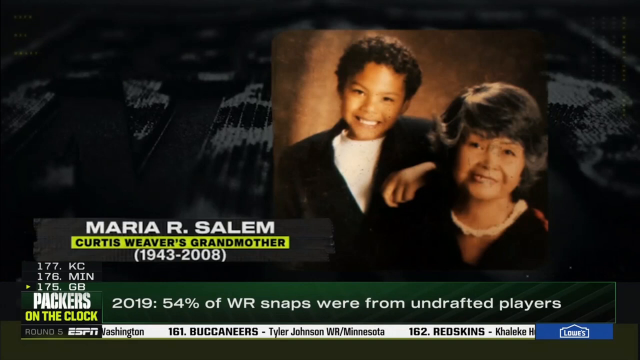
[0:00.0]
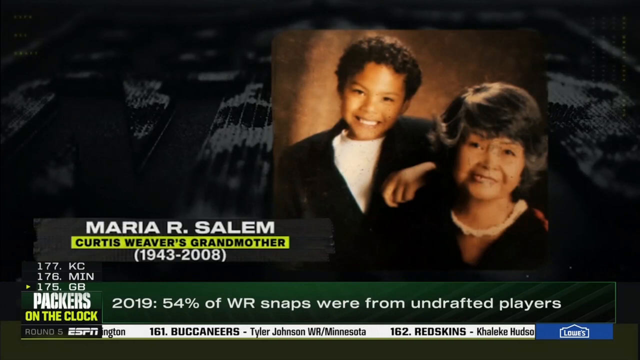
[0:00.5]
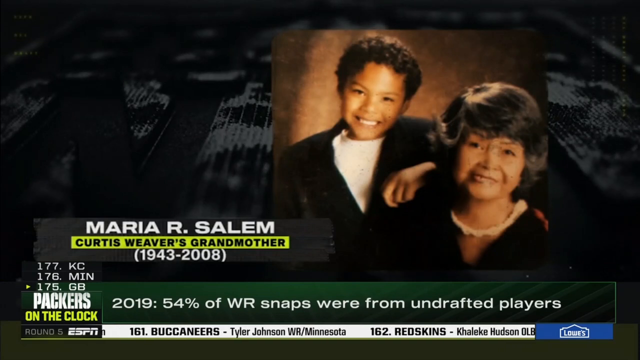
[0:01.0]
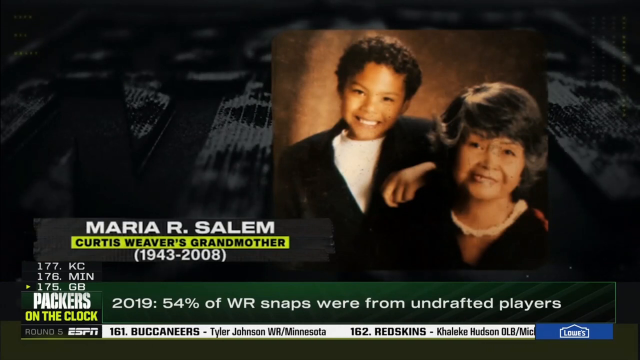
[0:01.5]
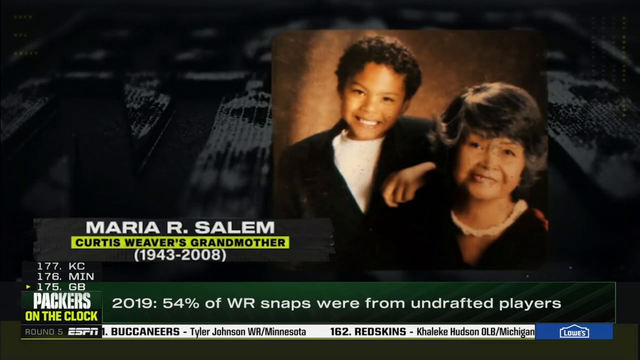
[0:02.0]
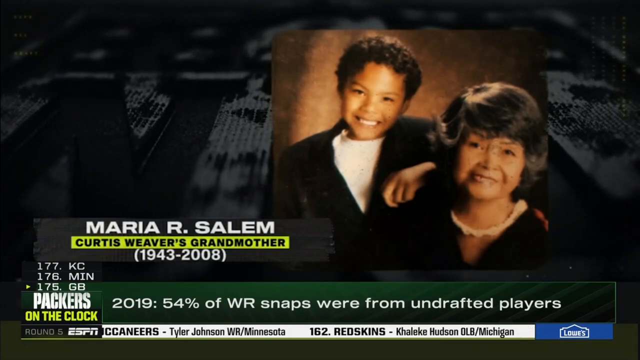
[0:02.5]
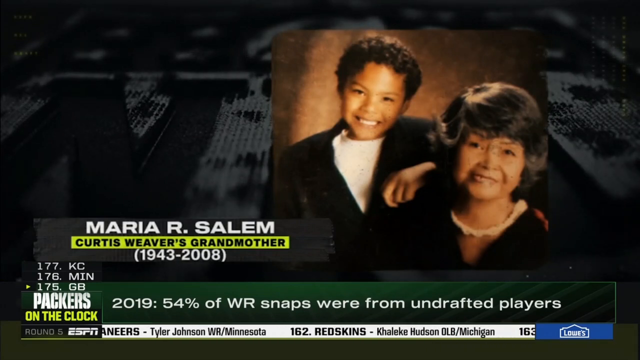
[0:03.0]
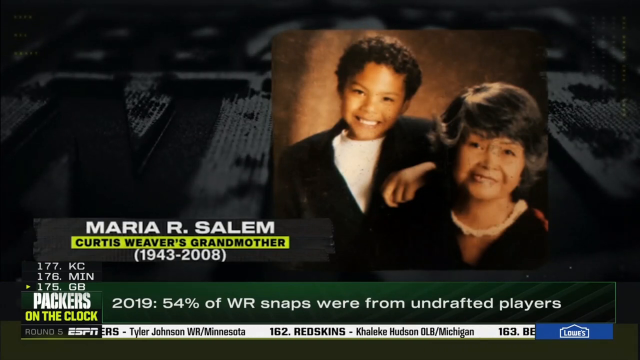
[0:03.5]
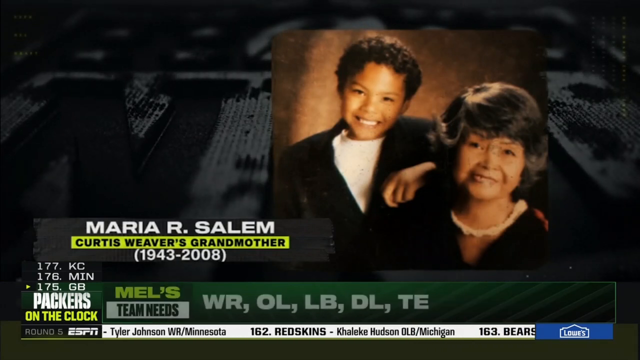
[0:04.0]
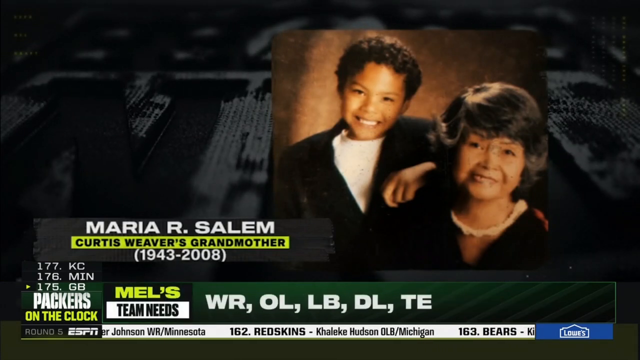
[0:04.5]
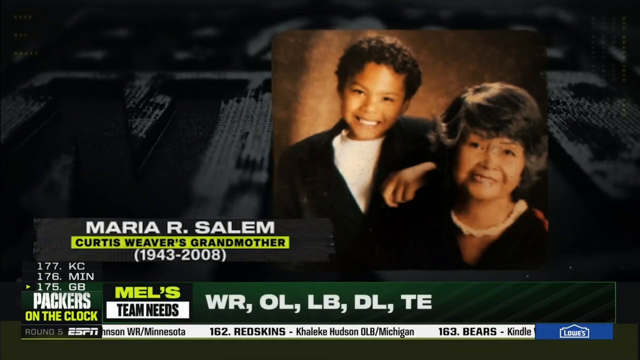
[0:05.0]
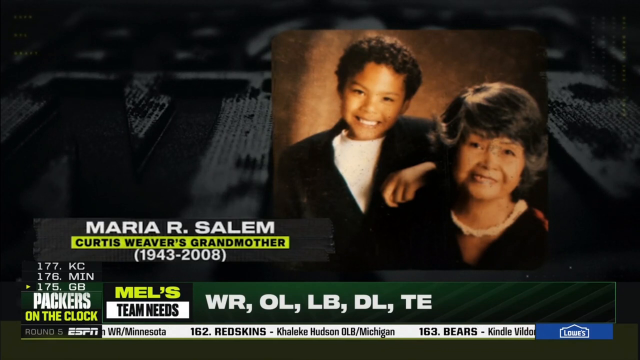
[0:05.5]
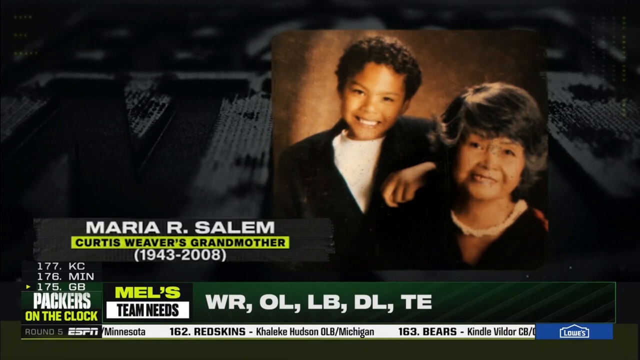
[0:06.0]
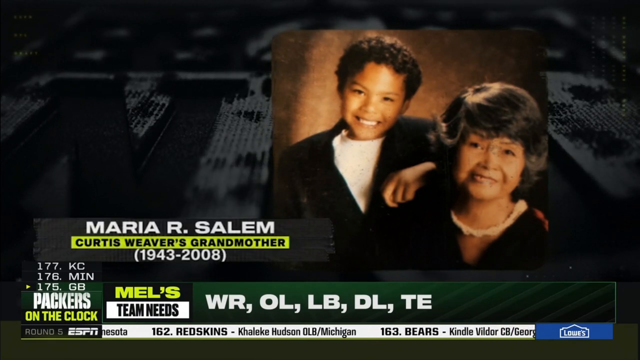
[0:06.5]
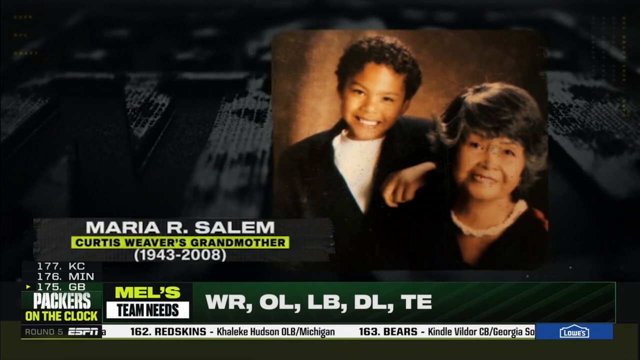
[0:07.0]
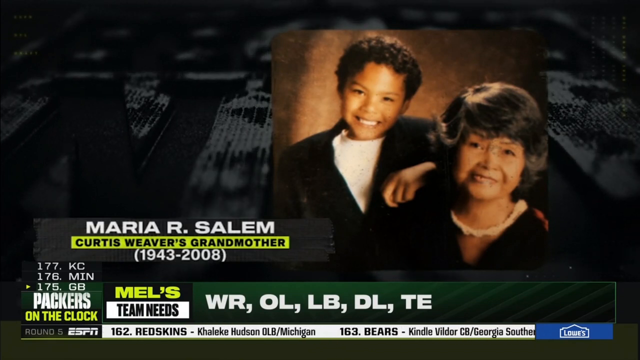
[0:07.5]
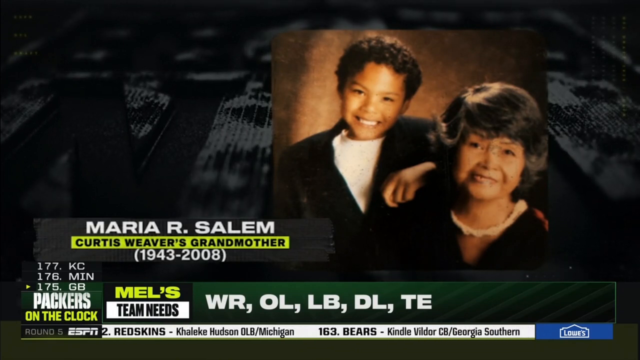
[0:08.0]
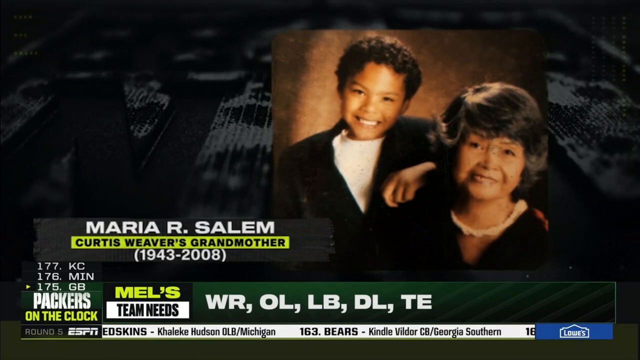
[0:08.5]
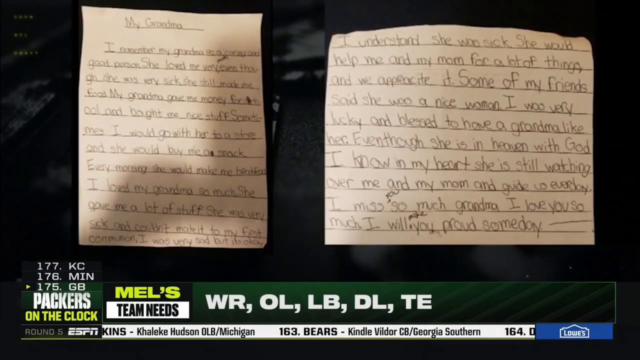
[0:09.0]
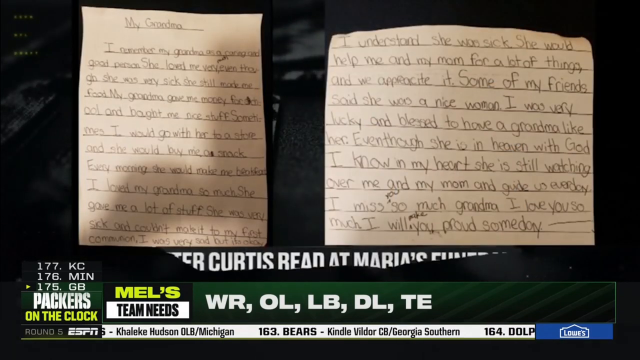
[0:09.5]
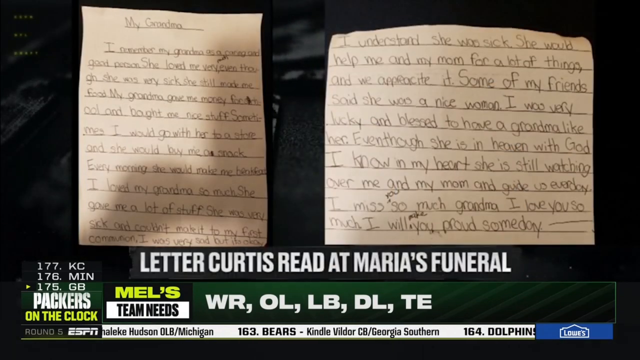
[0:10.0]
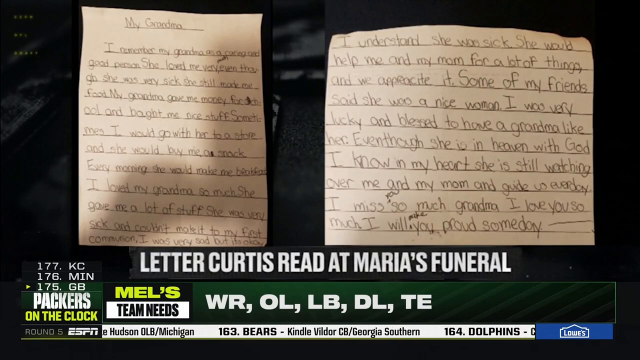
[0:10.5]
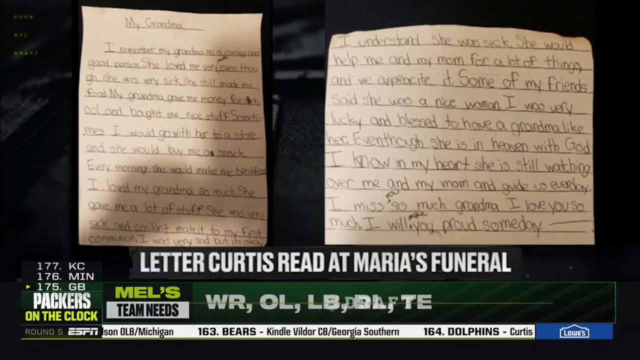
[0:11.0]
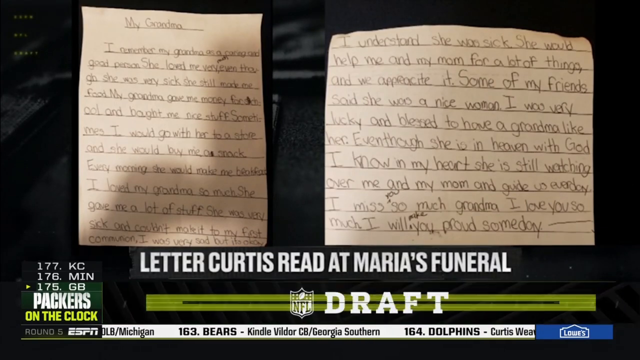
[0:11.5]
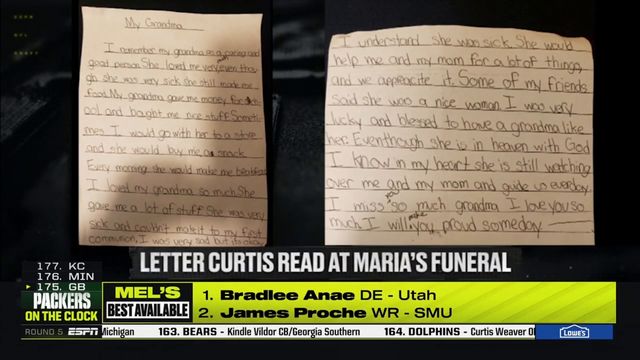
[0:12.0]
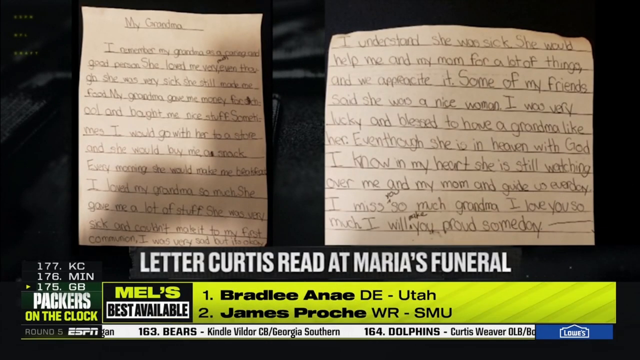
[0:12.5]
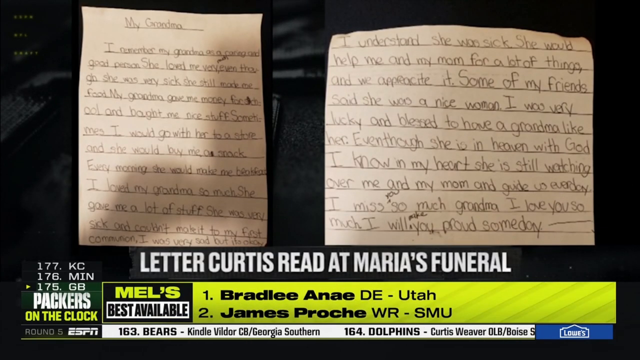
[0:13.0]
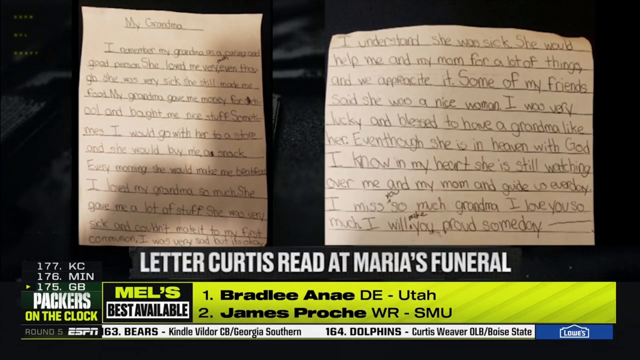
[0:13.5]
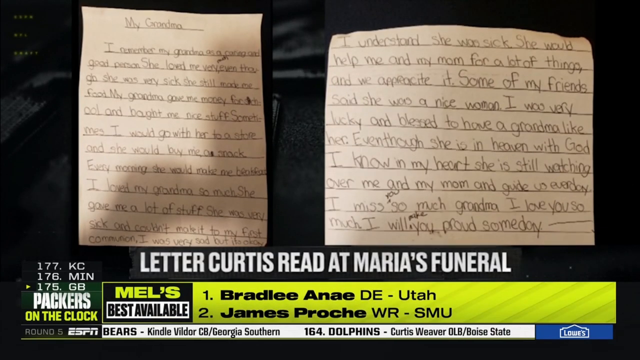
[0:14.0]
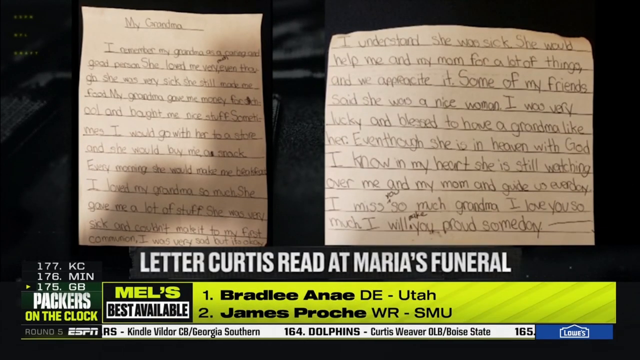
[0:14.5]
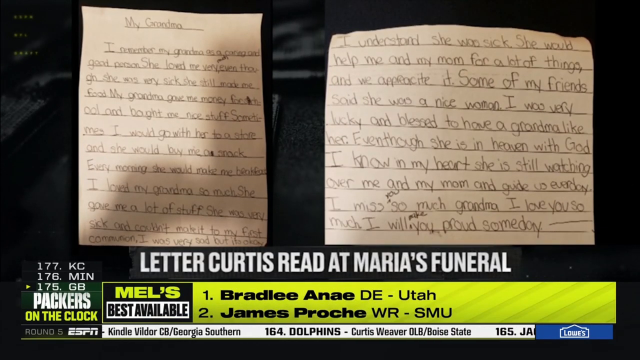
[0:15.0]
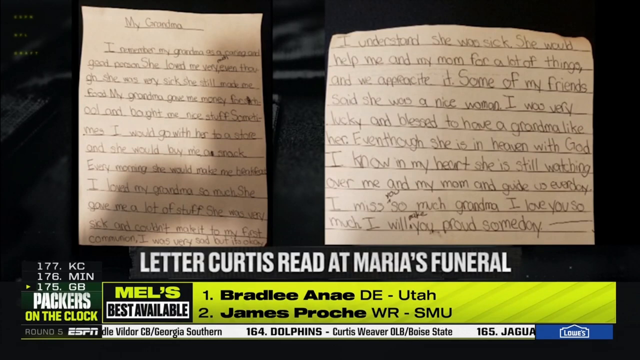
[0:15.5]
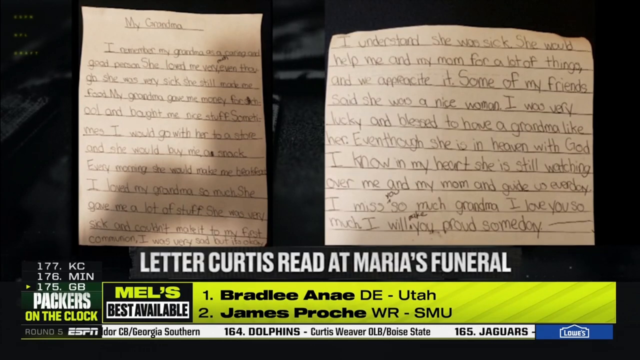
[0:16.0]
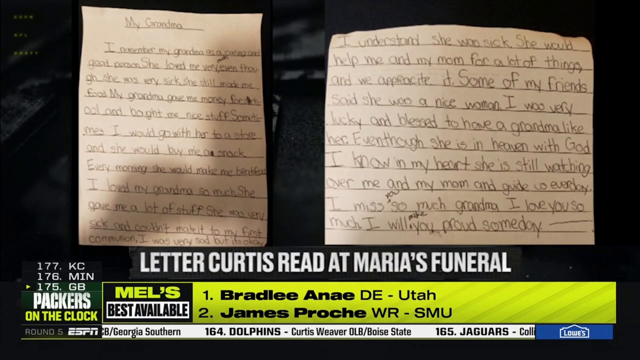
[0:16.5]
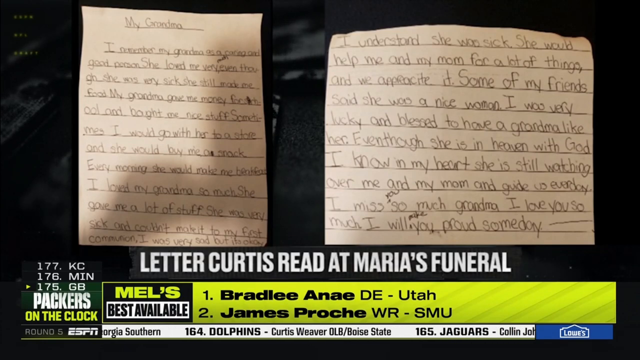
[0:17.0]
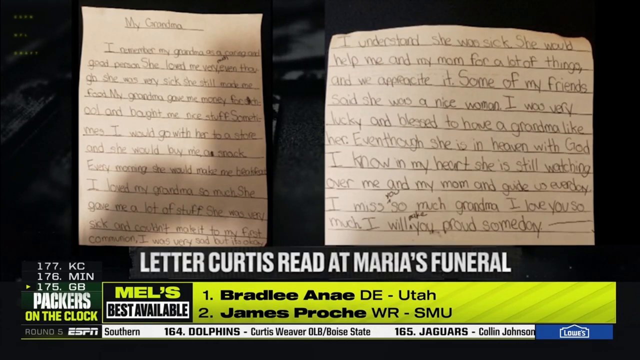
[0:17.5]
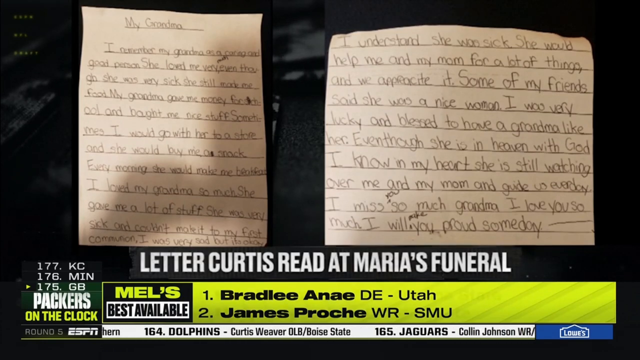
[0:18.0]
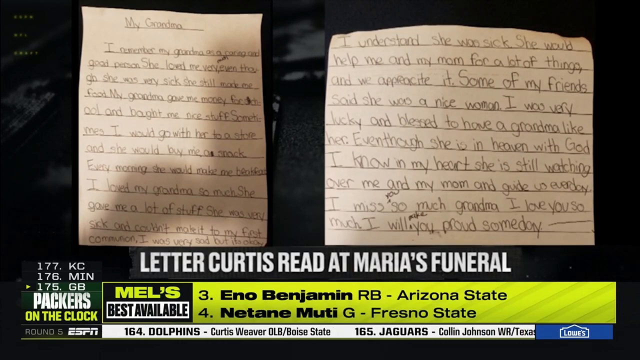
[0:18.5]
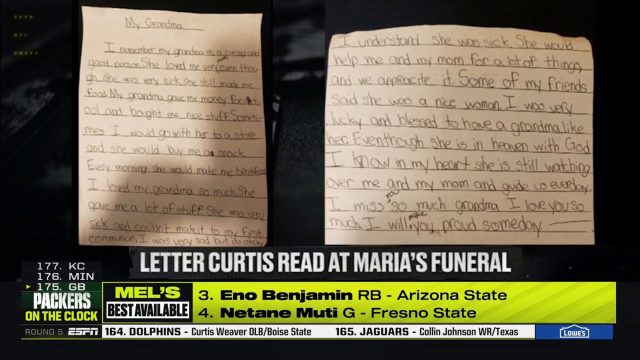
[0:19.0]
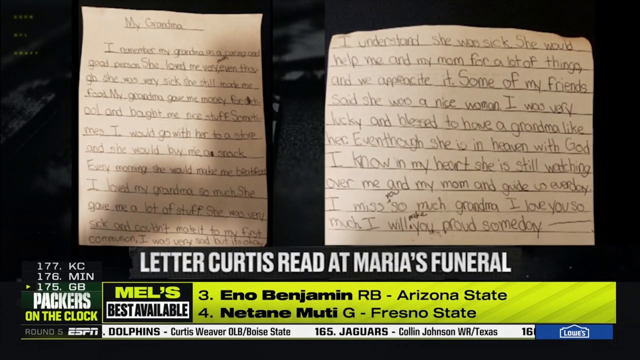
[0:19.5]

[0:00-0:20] The video begins with a photograph of Curtis Weaver as a child together with his grandmother. White text on the screen reads "Maria R. Salem, 1943-2008". A green bar at the bottom of the screen carries white text reading "2019, 54% of WR snaps were from undrafted players", and next to it is text reading "Packers on the clock". The video transitions to a handwritten note that says "my grandma", which seems to have been written by Curtis Weaver as a child; it is a letter about how much he loves and misses his grandma, with many nice messages. For most of this part, a moving white bar runs along the bottom of the screen, reading round 5 ESPN, and it seems to list draft picks: 162, 163, then 164, where Curtis Weaver appears, 165, and onward.